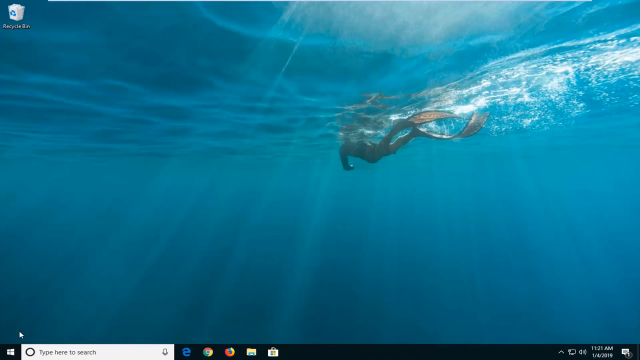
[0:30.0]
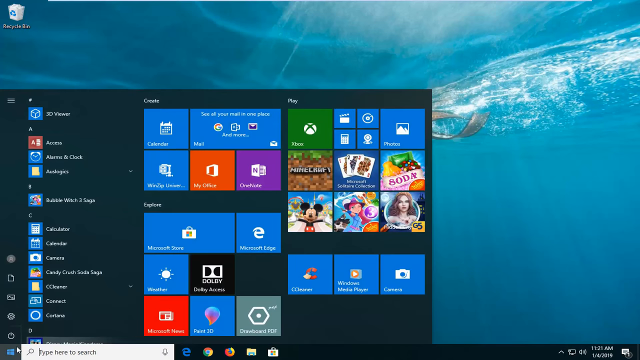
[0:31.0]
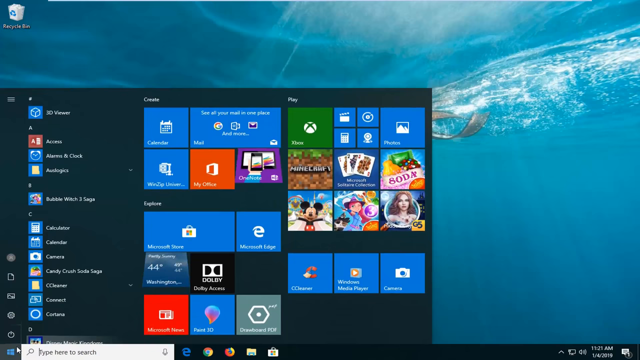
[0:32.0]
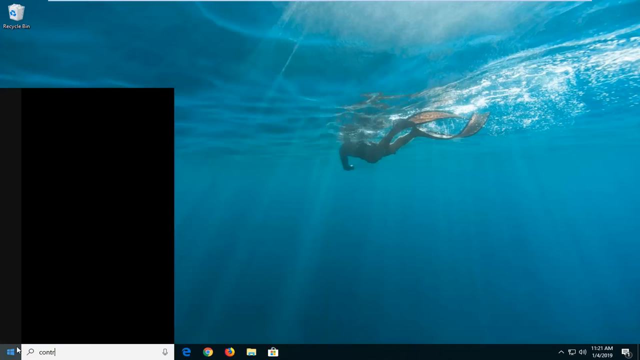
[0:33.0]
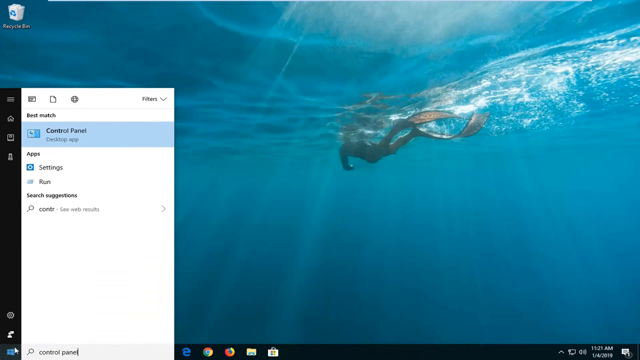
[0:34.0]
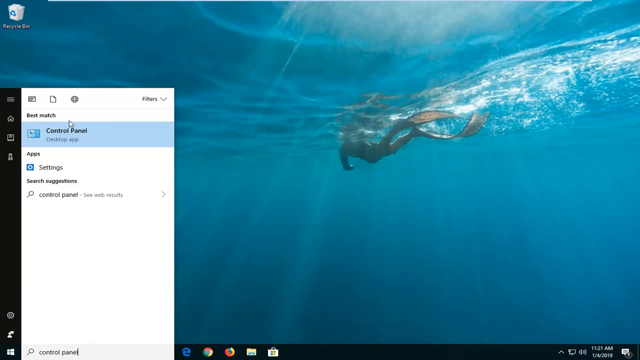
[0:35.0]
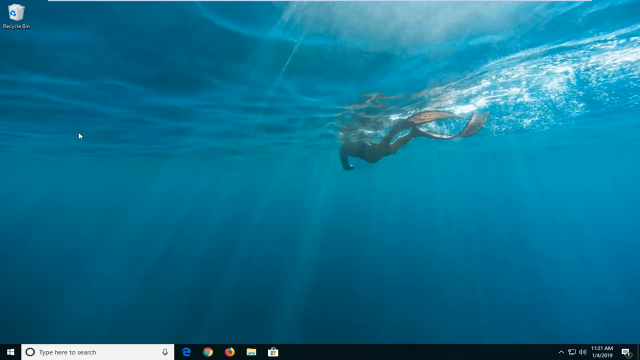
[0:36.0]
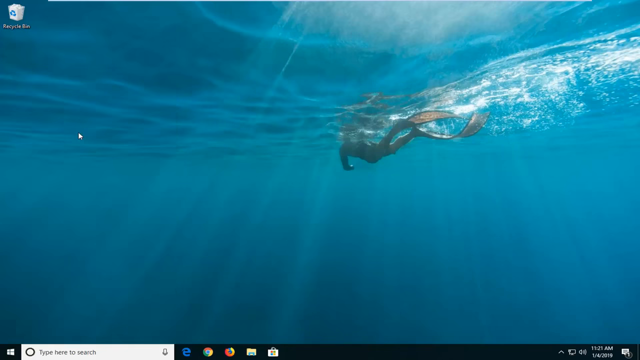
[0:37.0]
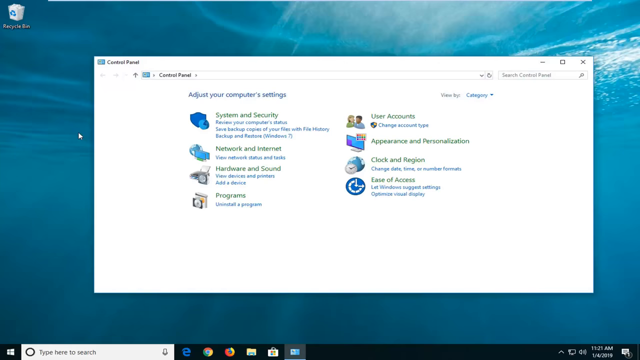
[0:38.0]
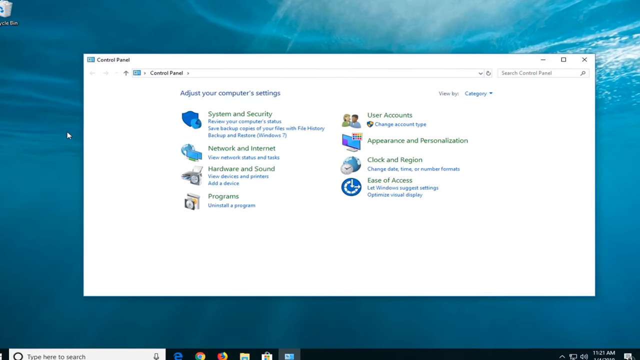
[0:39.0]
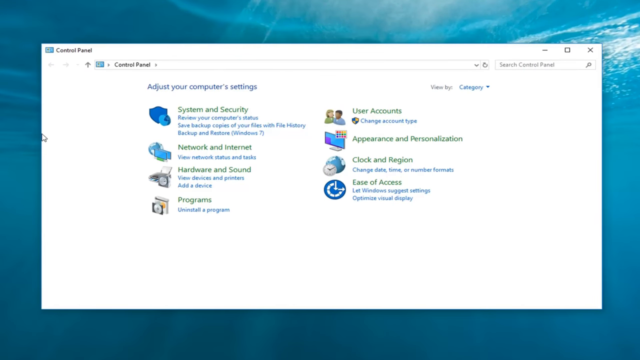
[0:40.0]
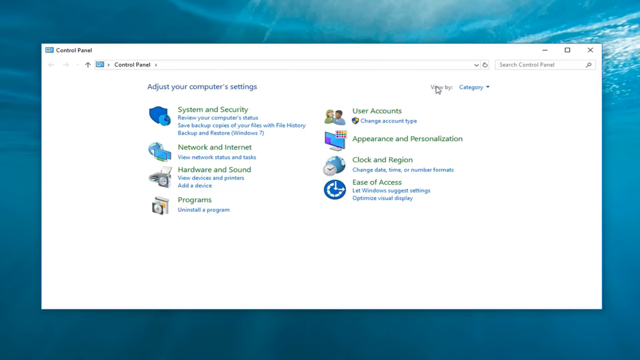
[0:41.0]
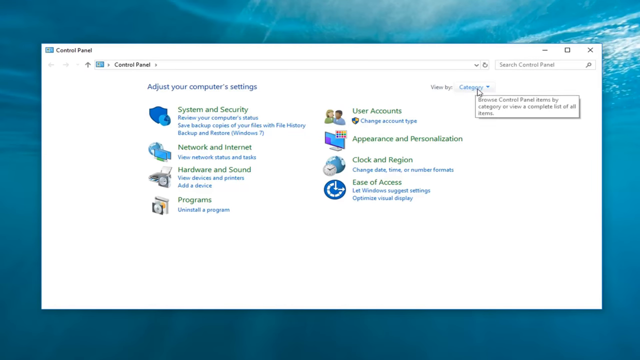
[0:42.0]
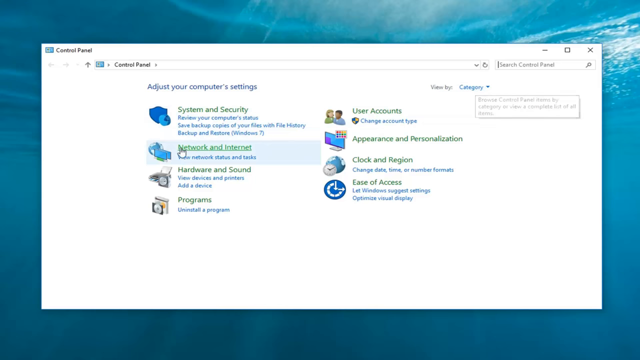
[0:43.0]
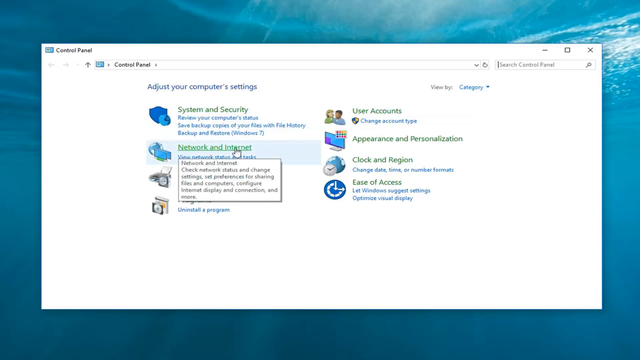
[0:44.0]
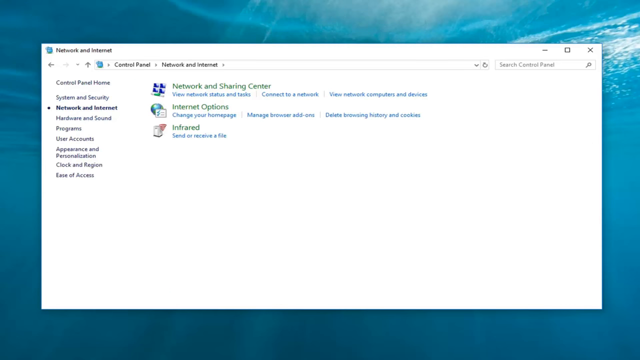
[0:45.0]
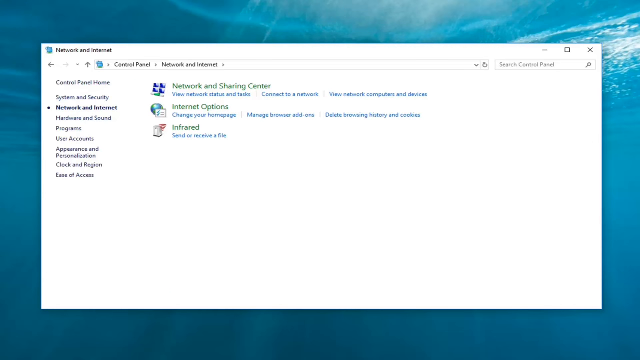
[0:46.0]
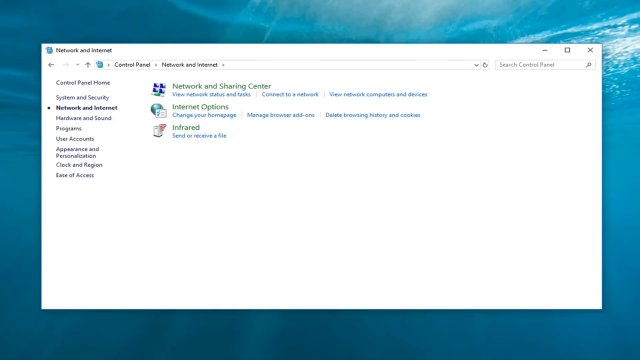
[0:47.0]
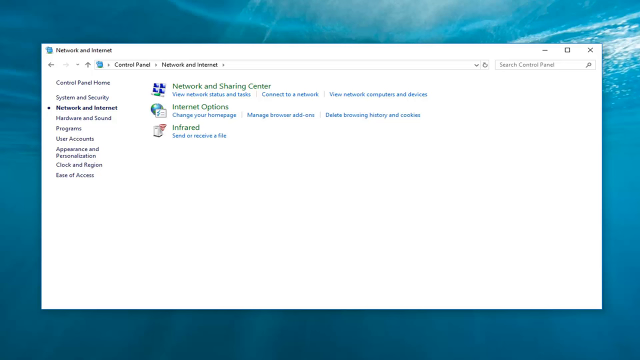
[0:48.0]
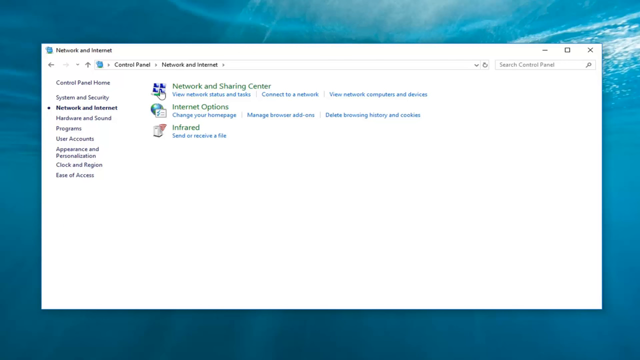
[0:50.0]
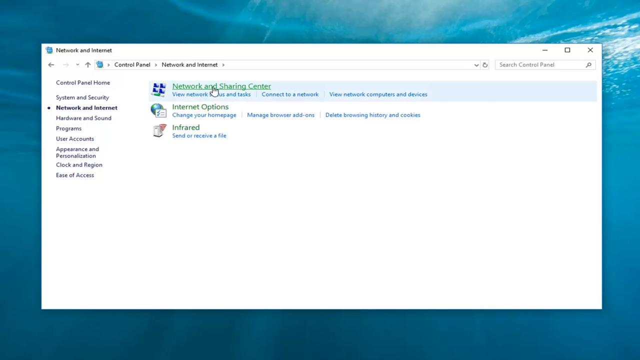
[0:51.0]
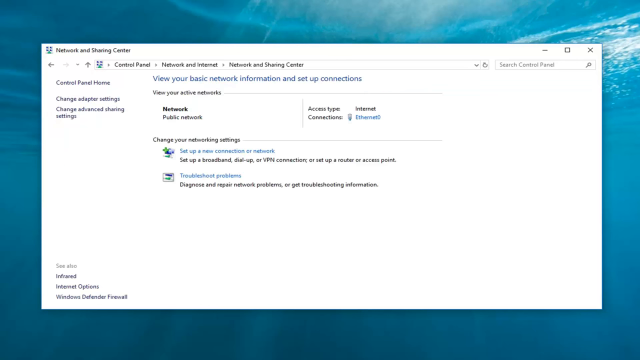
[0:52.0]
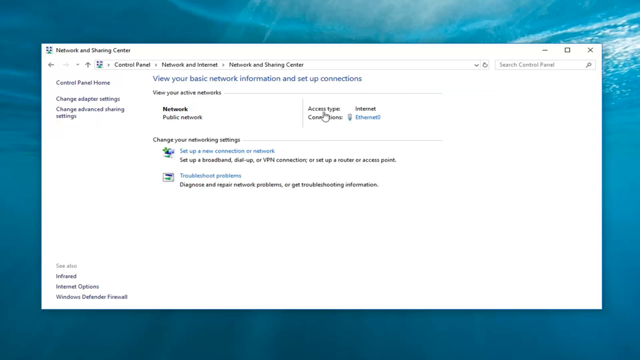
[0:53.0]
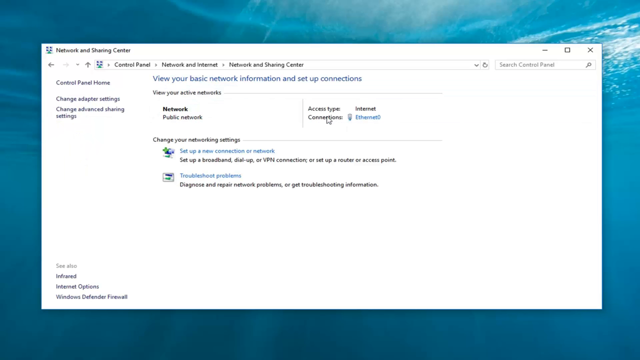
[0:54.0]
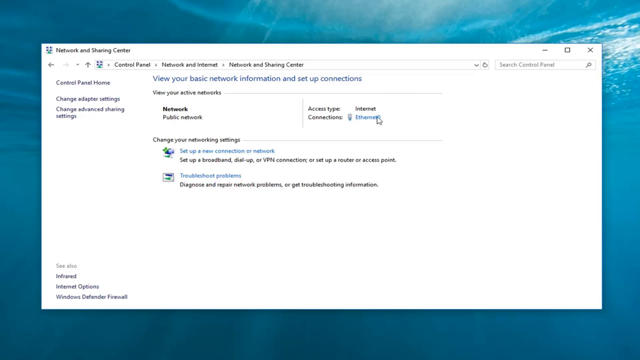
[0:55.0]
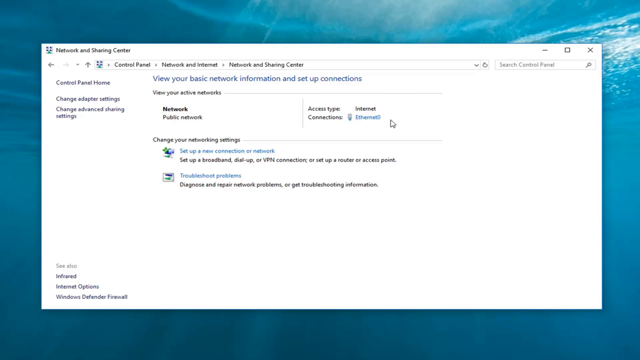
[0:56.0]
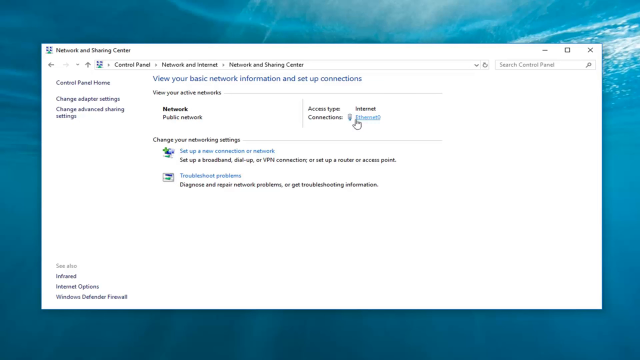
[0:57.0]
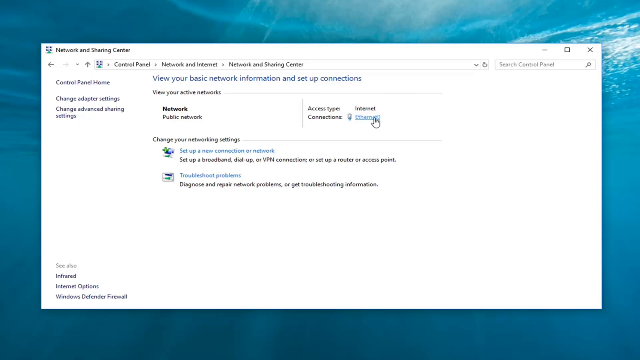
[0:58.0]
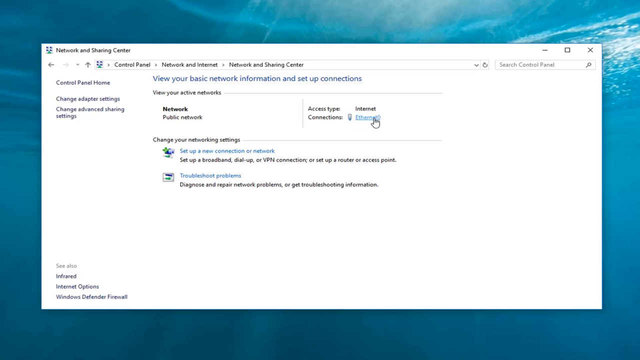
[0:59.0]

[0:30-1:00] Someone pulls up a search bar and types in "Control Panel," and the Control Panel opens. A window reading "Control Panel" and "adjust your computer settings" shows two columns of options with graphics: System and Security, Network and Internet, Hardware and Sound, and Programs in one column, and User Accounts, Appearance and Personalization, Clock and Region, and Ease of Access in the other. The mouse clicks on Network and Internet, which brings up three additional menu items in the window: Network and Sharing Center, Internet Options, and Infrared. The computer looks like a Windows computer, not a Mac. The mouse then hovers over another window as if to make a selection.